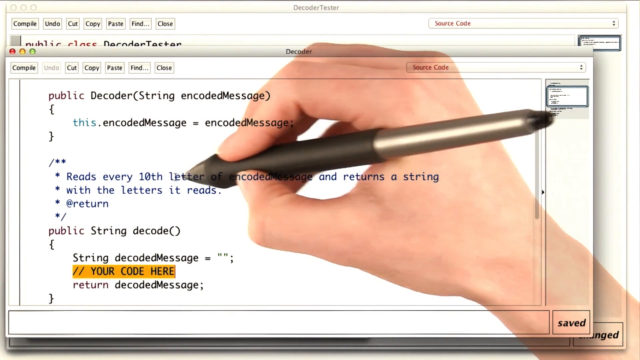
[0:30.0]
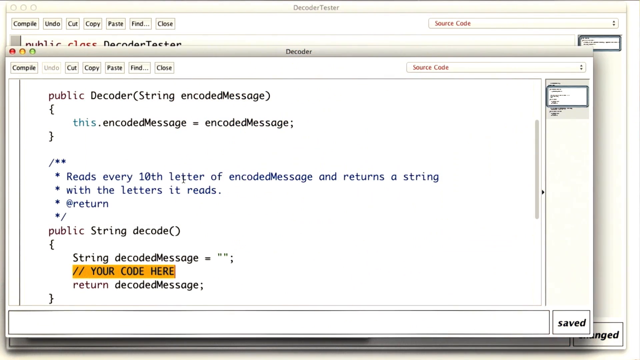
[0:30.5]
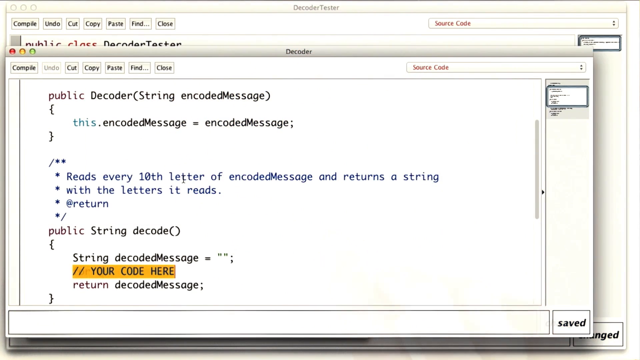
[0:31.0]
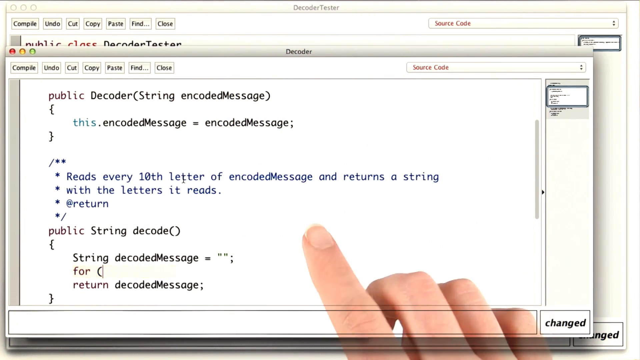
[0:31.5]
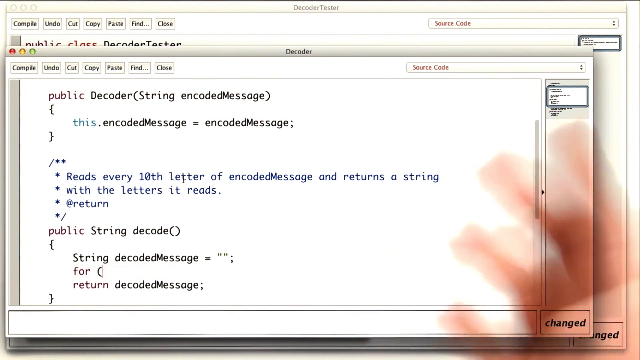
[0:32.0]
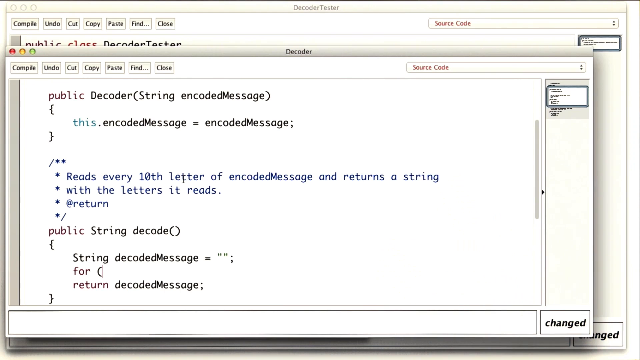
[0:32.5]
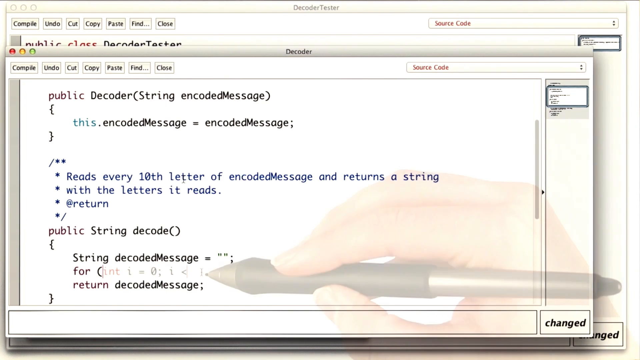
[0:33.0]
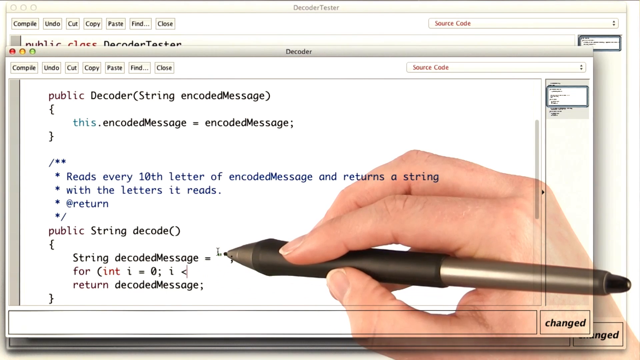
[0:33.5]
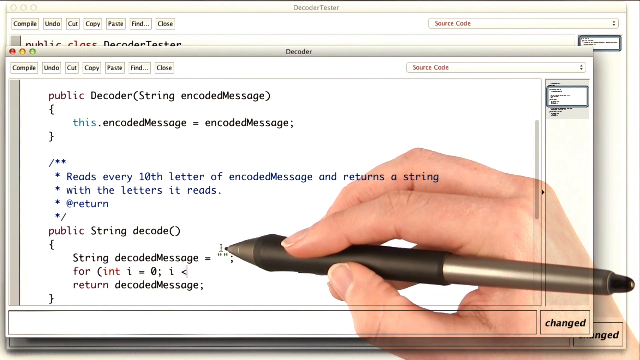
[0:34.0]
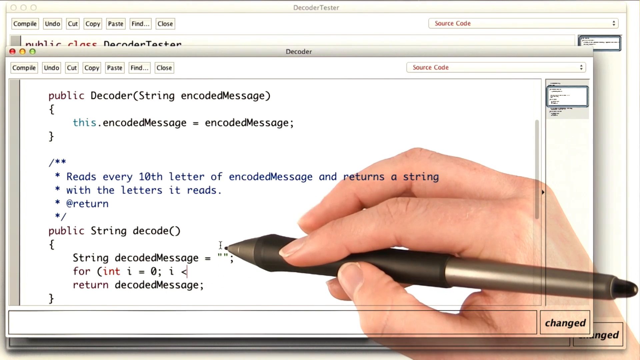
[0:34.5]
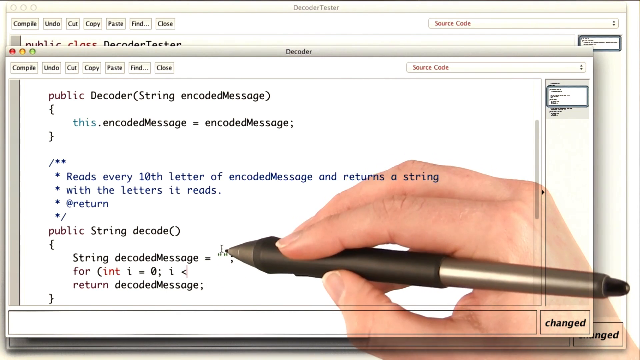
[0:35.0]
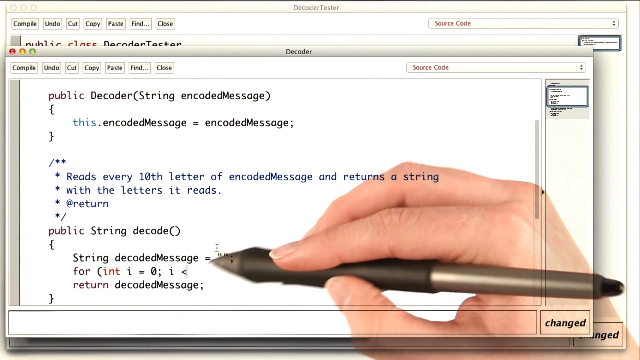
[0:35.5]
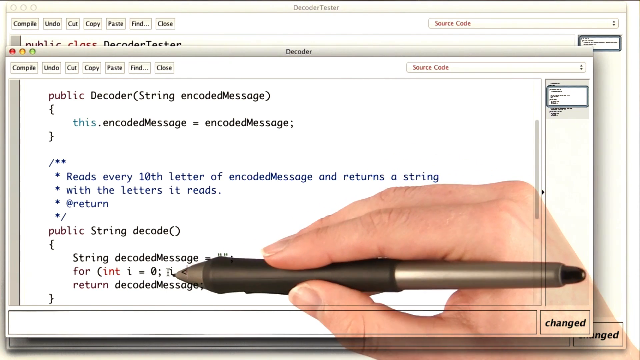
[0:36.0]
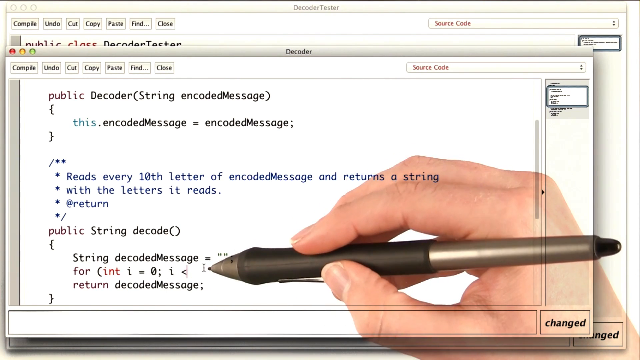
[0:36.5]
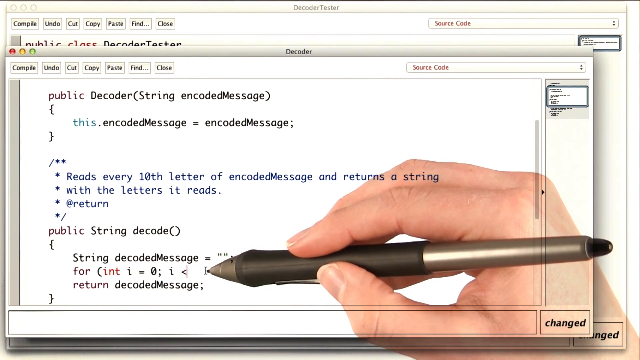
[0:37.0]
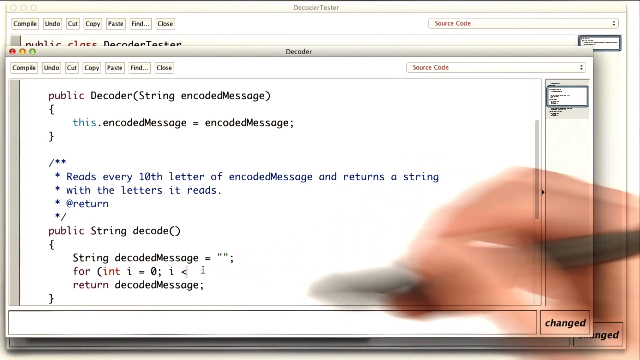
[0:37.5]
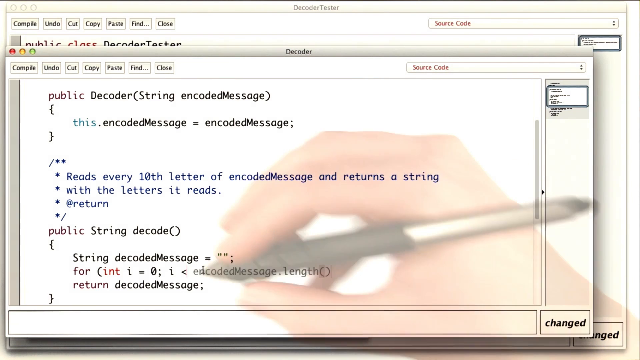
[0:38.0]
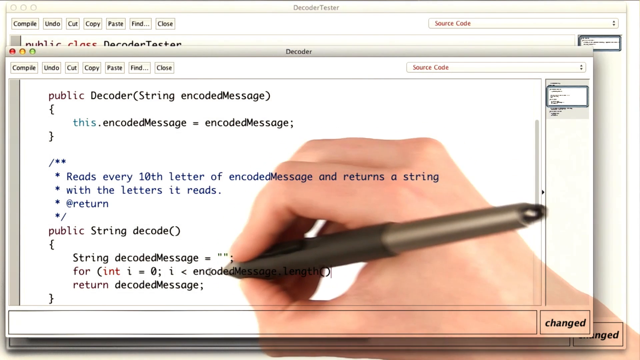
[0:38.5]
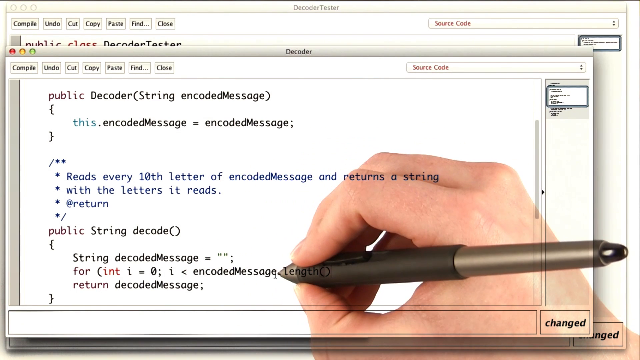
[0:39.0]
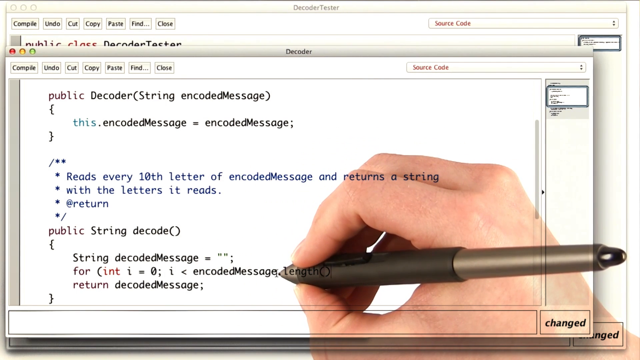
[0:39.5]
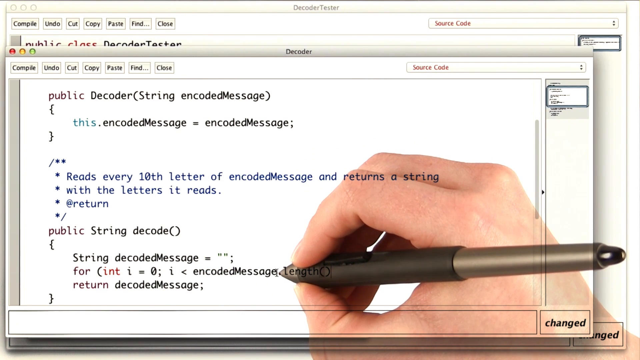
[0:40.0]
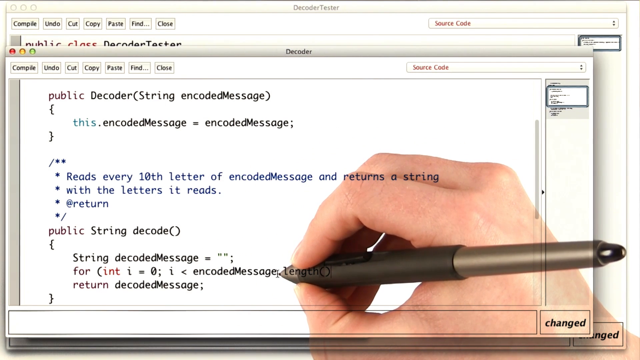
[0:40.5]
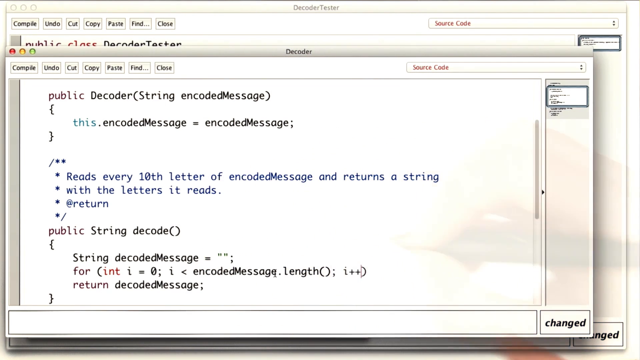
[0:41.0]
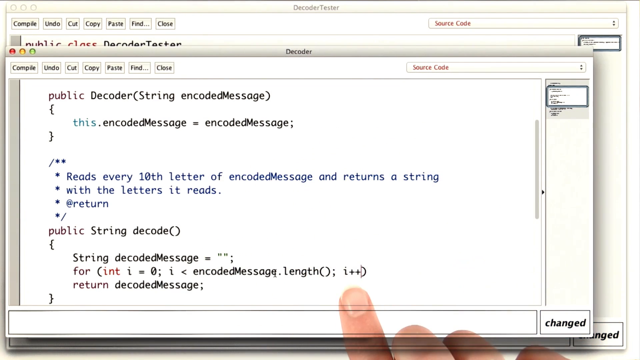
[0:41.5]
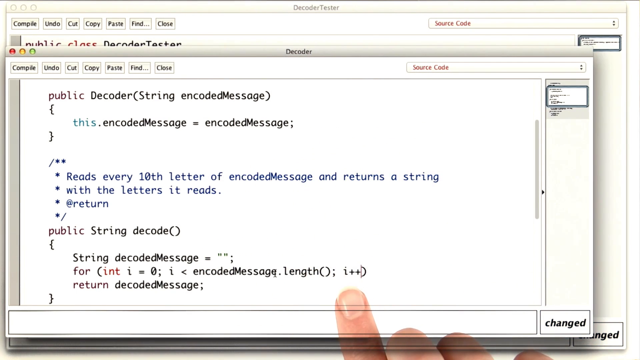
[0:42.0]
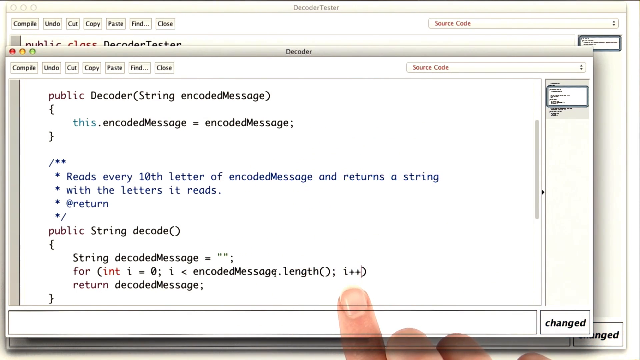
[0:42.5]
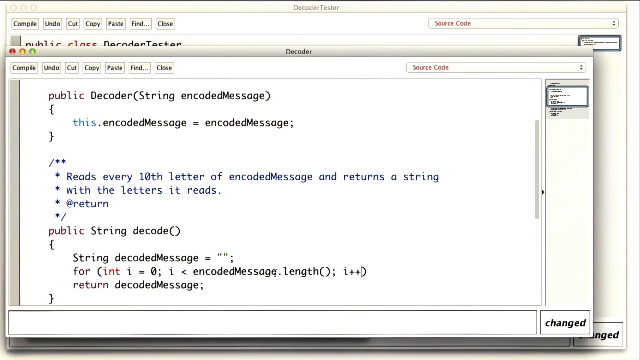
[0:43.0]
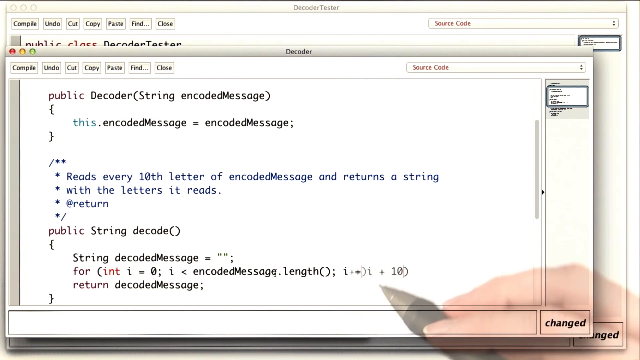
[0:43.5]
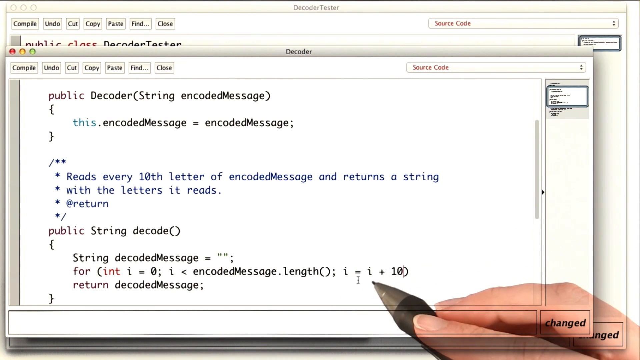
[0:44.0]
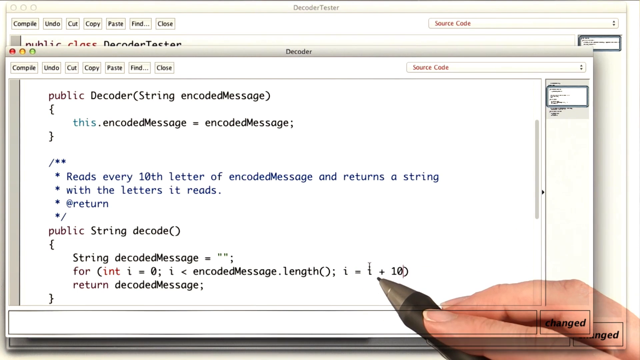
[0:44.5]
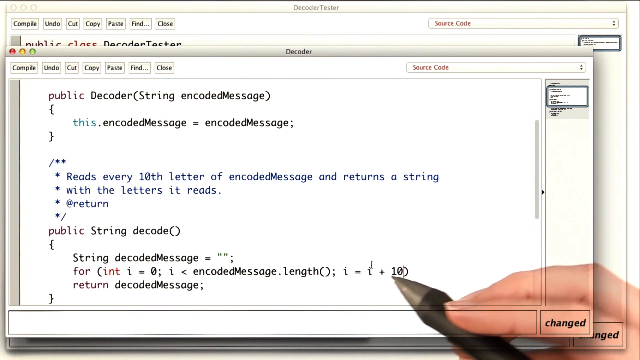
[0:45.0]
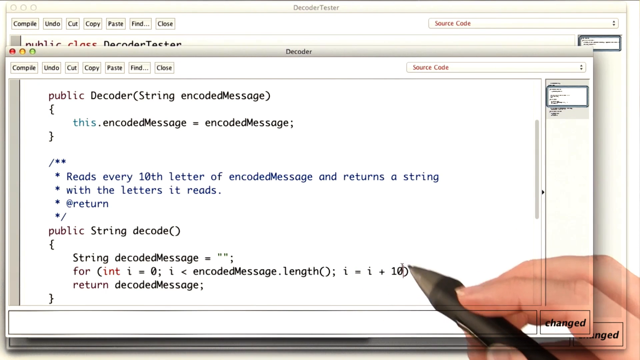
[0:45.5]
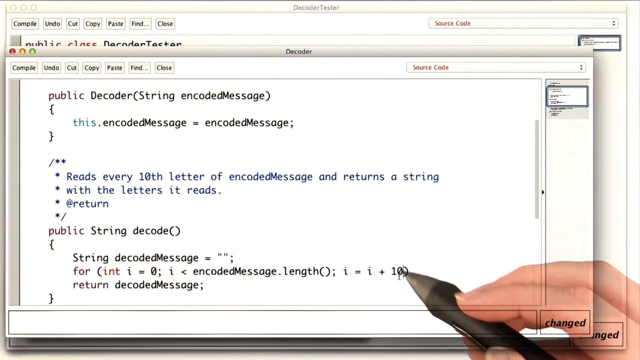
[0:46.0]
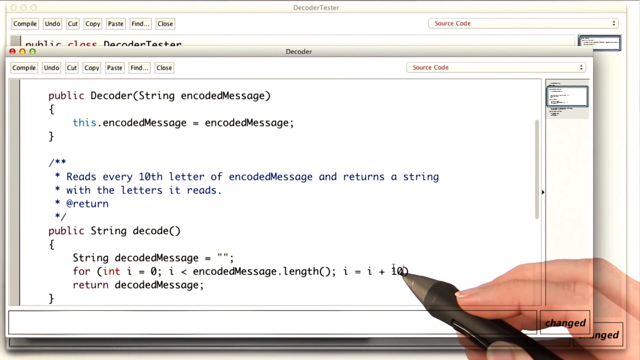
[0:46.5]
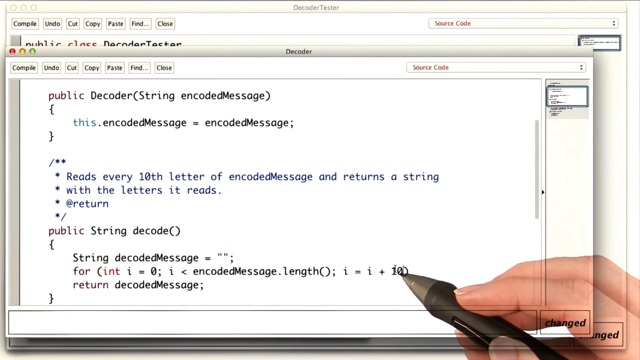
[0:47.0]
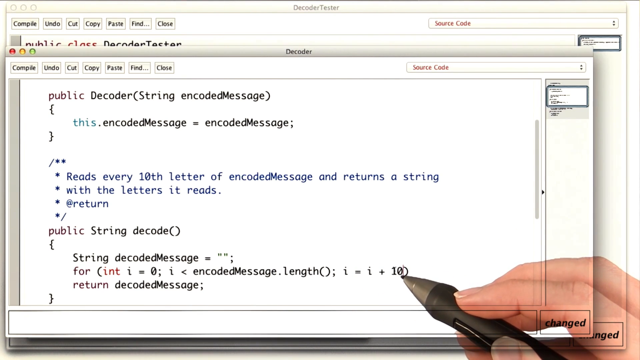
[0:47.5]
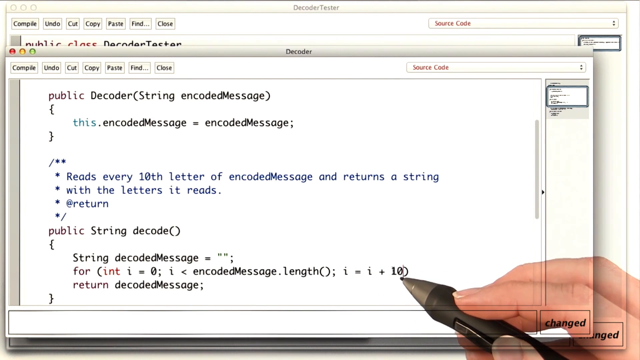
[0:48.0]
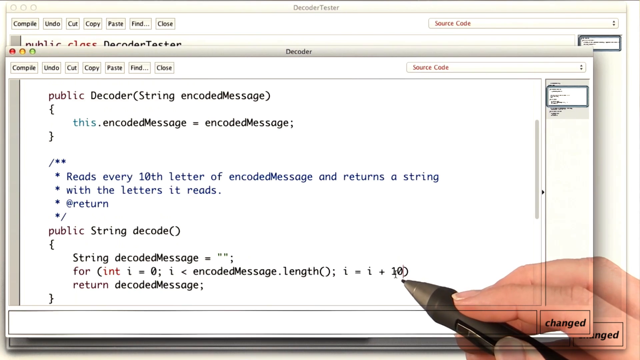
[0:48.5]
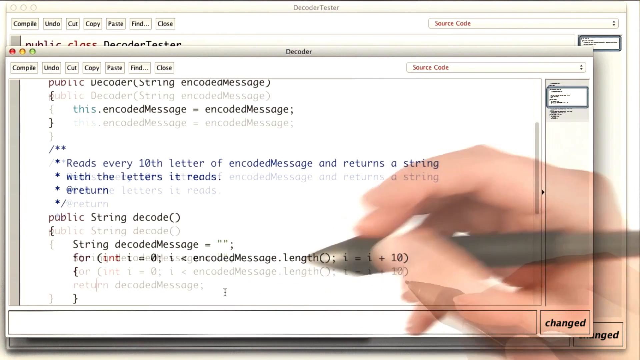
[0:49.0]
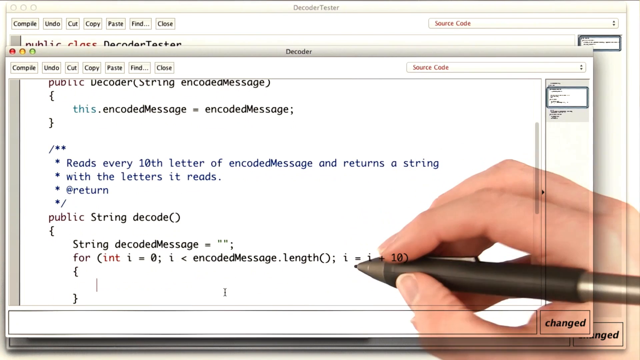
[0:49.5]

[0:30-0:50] The hand holding the pen continues making edits while the decoder pages are open; the decoder tester and the decoder page remain open. The person puts the pen away and points at something on the decoder page, at the text at the bottom. The hand comes back with the black pen. The screen says "public decoder string encoded message. This encoded message equals encode message." Below that it says "reads every 10th letter" and returns a string, followed by "the letters it reads at return public string decode string decoded message equals", "int i equals zero" and "return decoded message". The person adds another part that says "encoded message length i plus 10" and circles the 10. They then add an open section below it for more text.